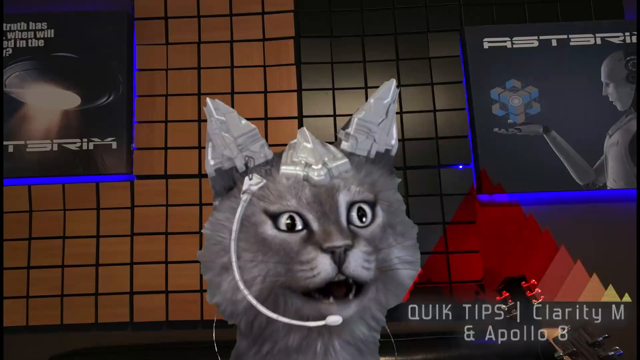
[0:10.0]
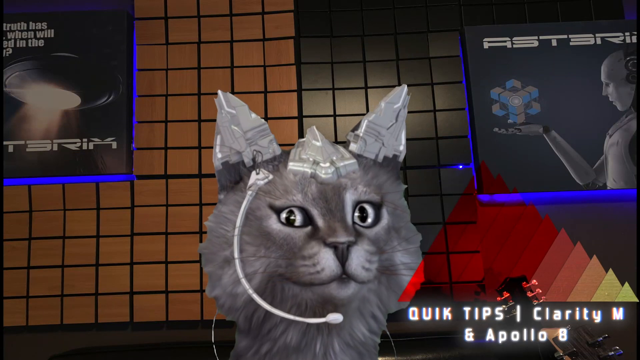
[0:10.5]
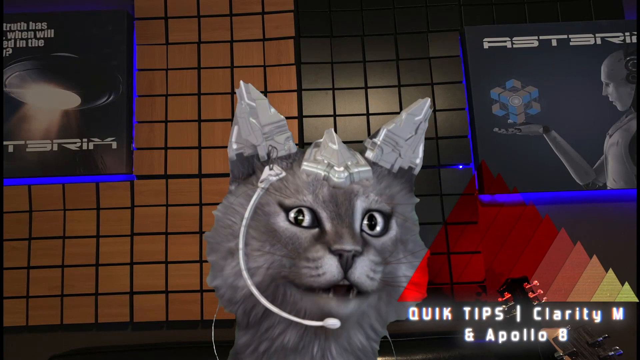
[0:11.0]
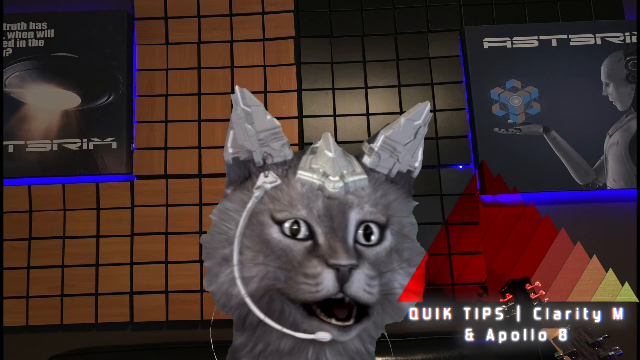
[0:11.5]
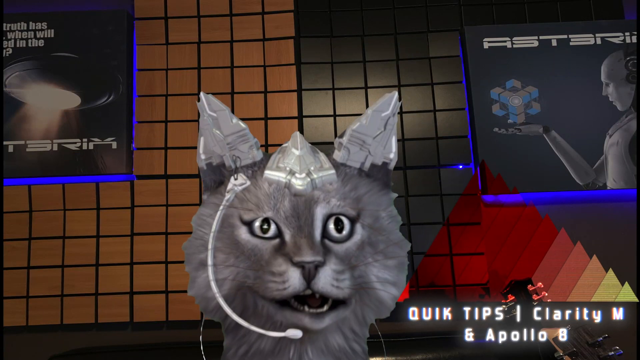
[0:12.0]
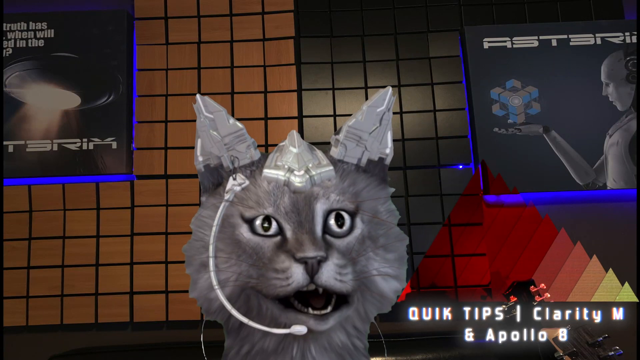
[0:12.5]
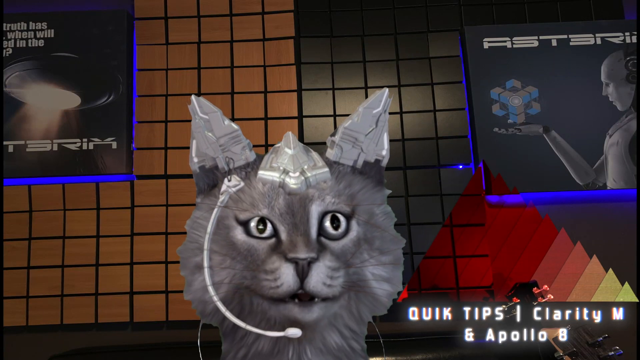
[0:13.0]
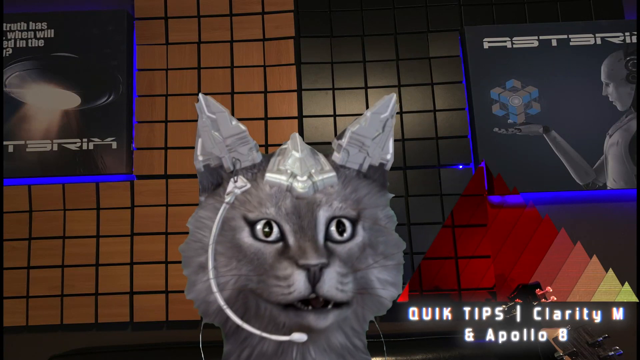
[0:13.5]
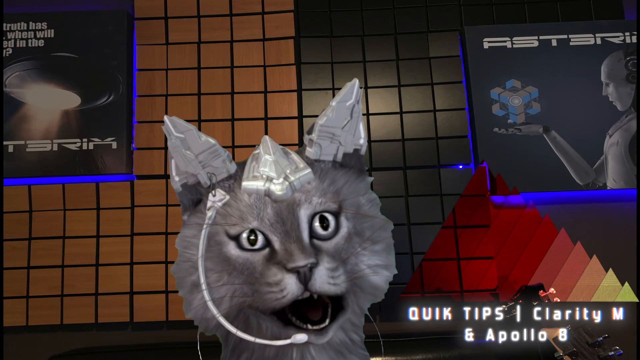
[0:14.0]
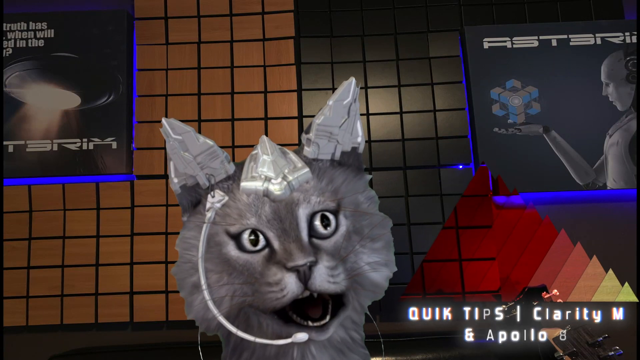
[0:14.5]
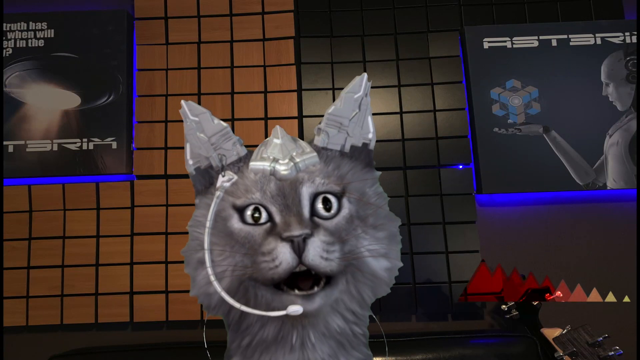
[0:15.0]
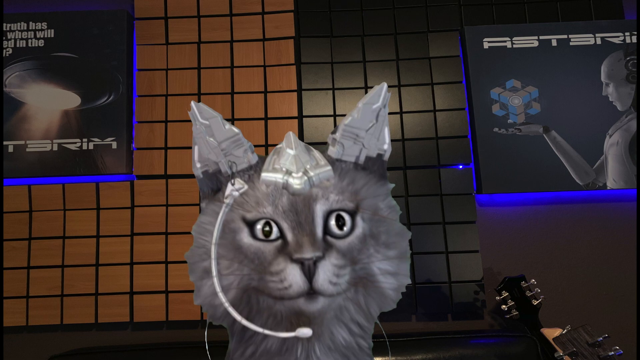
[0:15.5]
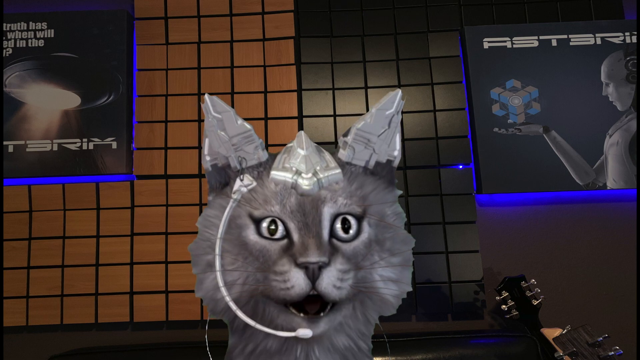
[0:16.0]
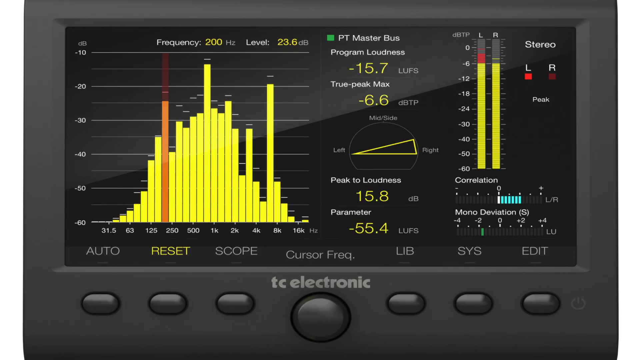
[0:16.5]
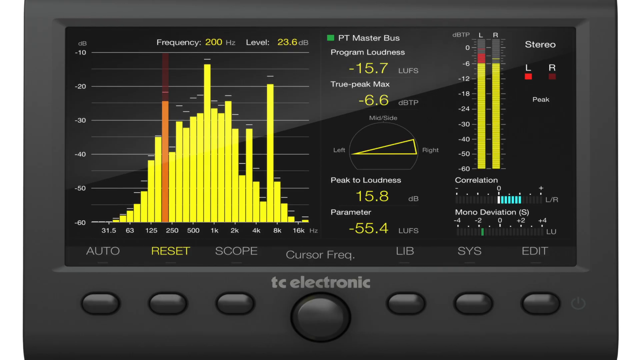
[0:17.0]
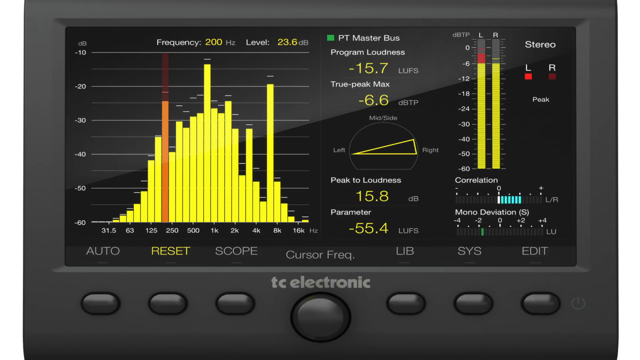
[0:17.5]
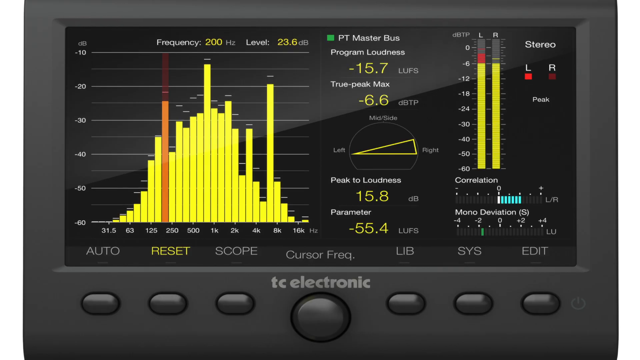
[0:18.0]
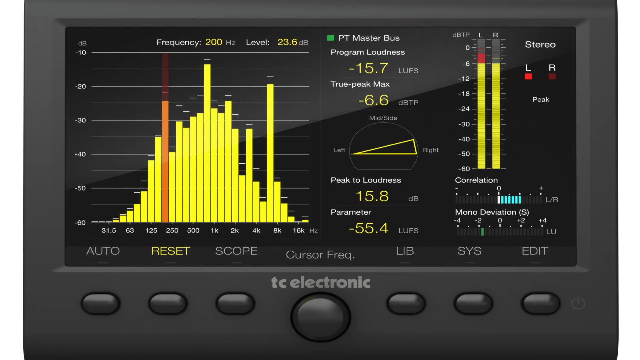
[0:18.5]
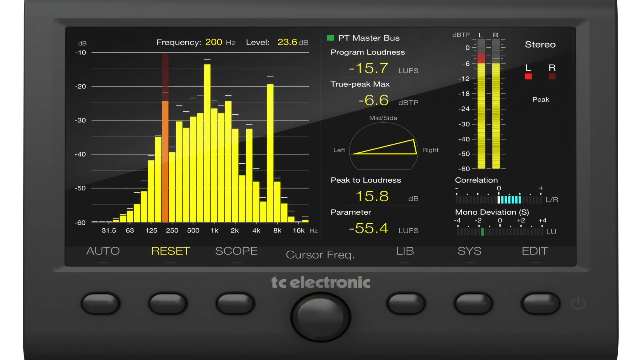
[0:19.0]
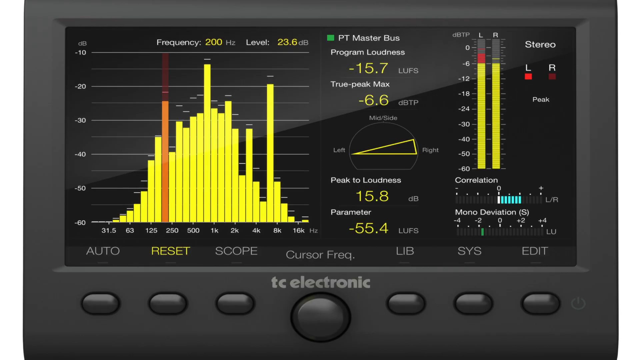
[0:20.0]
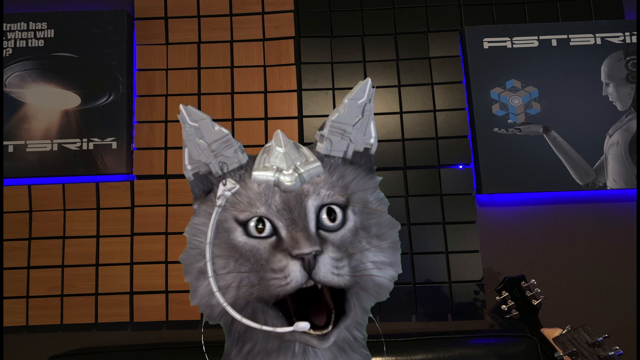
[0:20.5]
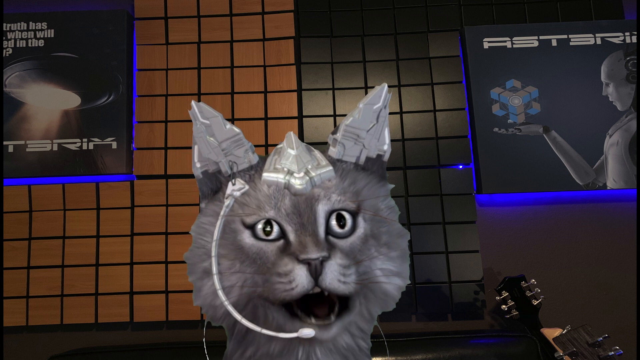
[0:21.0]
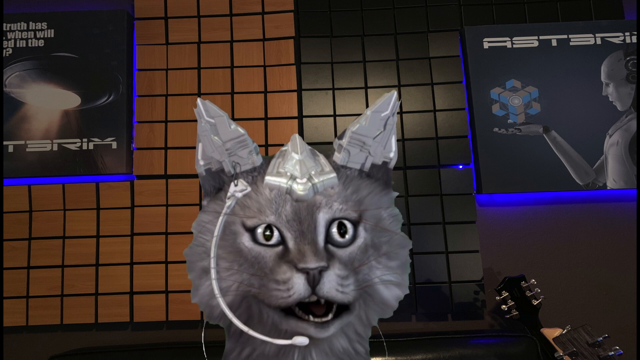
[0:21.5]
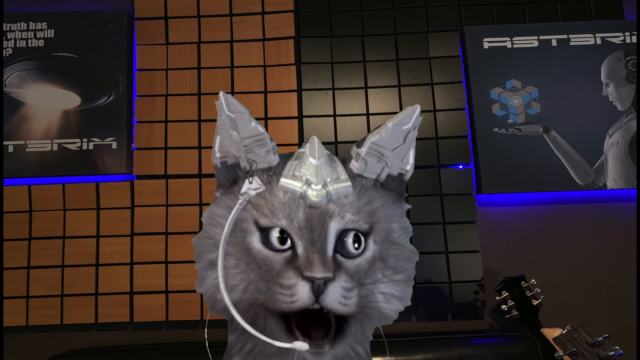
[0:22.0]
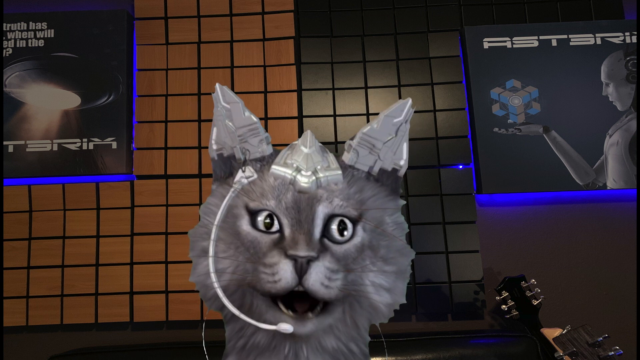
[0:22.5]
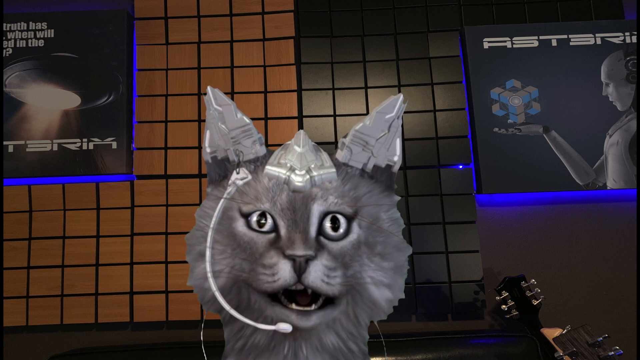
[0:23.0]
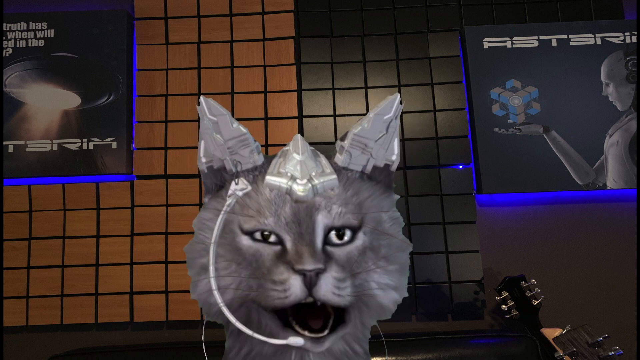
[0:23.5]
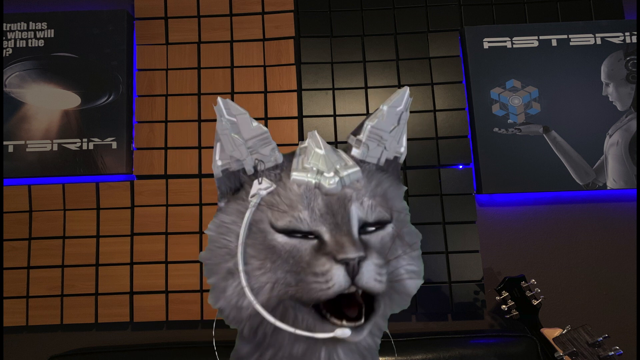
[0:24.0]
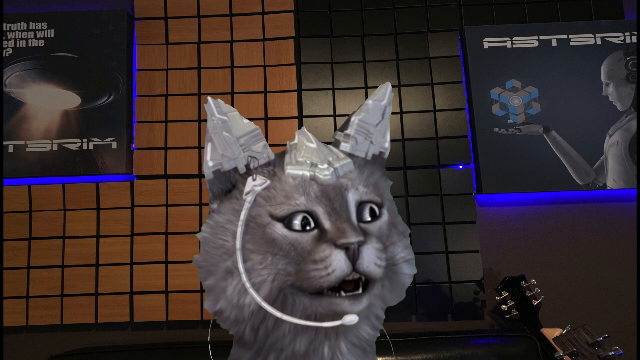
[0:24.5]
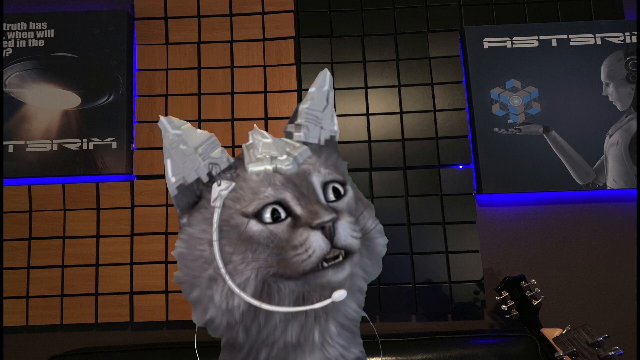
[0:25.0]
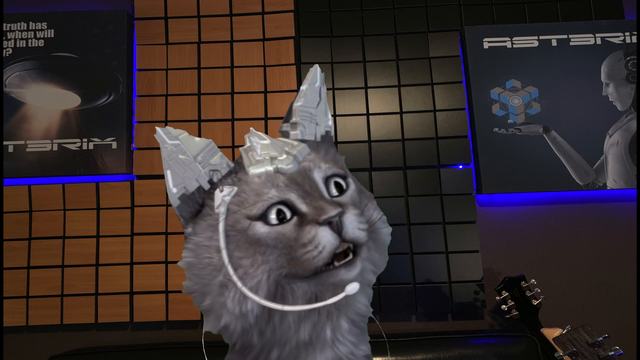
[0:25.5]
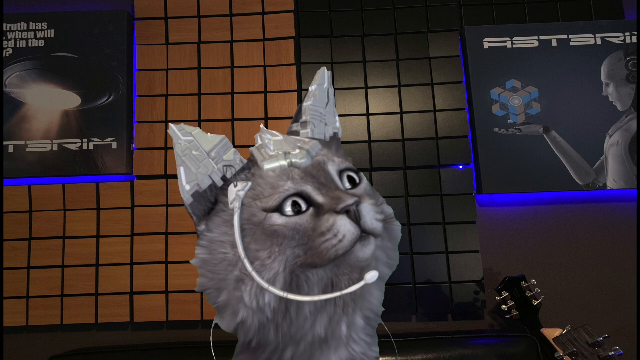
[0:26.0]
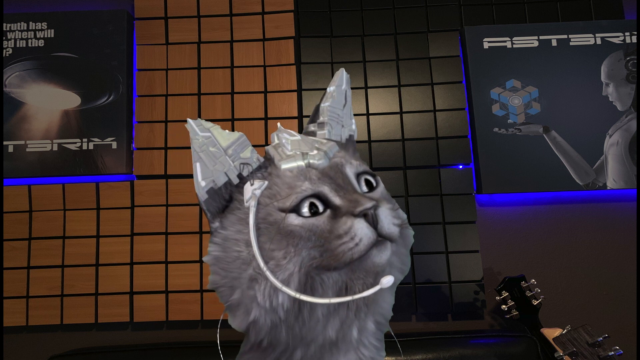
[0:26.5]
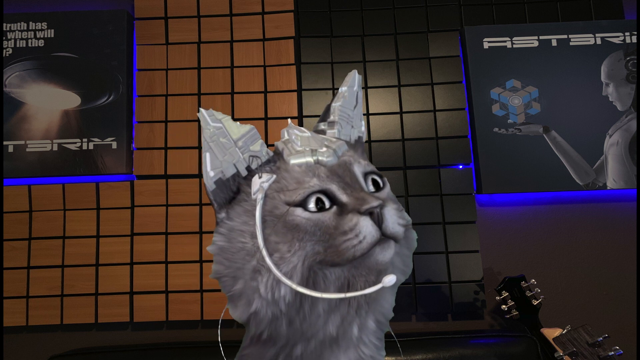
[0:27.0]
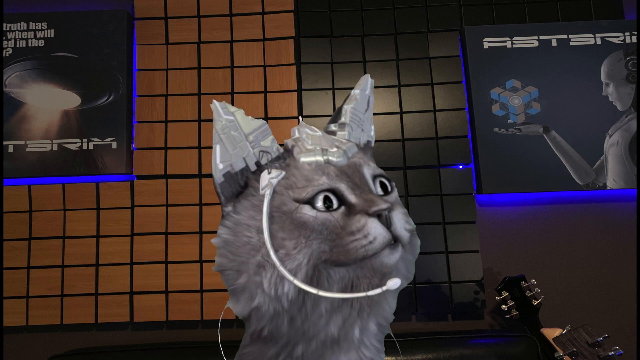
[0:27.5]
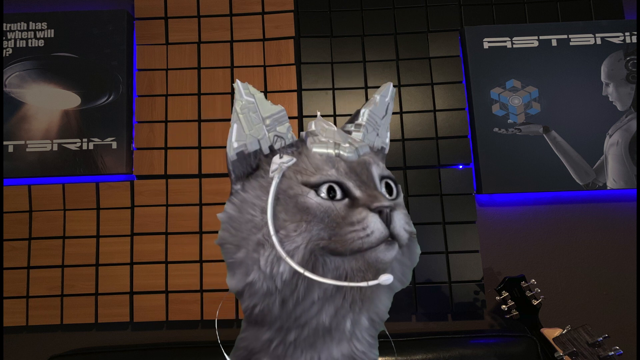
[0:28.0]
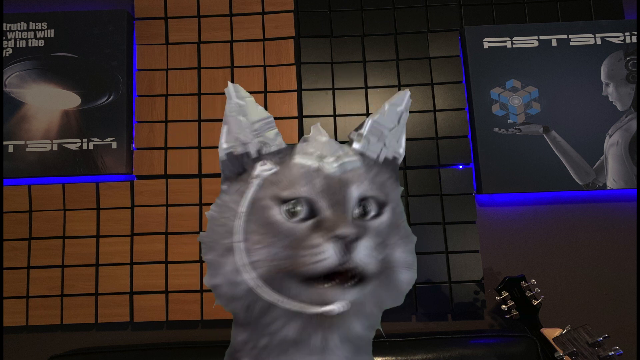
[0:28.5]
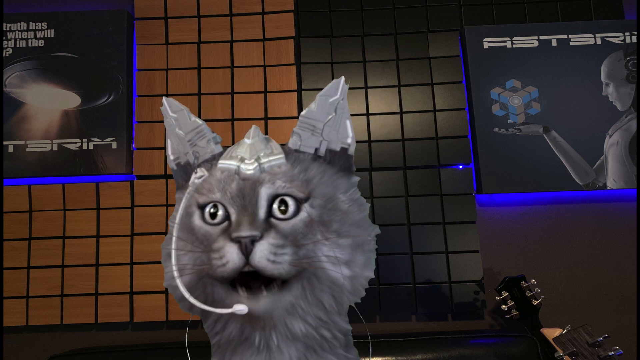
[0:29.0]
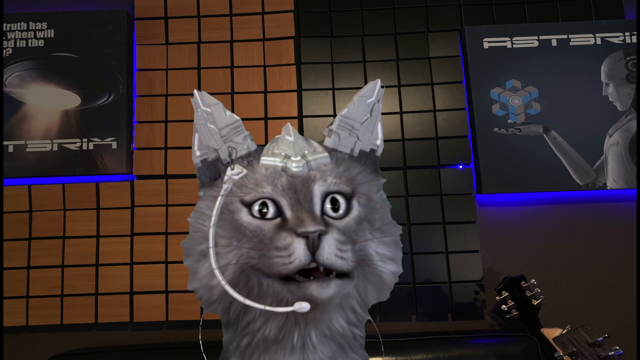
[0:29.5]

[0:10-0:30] A photo of a cat appears on the screen. It looks like a very real cat, is in black and white, and wears some kind of armor on its ears and forehead, with a microphone branching down around its face to its mouth. The cat appears to be speaking, perhaps singing. In the bottom right of the screen are the words "Quick Tips", with "Quick" spelled without the C, followed by "Clarity M" and "Apollo B" or "Apollo 8". Posters on the left and right in the background say "Asterix". The video cuts to a screen with many frequencies, volume meters and stereo readouts, with "TC Electronic" underneath it, possibly some kind of music software; a graph of frequencies is on the left side. The video then cuts back to the cat, which moves its head around as it speaks, looking in different directions, tilting its head, widening its eyes, and looking to the left and to the right.